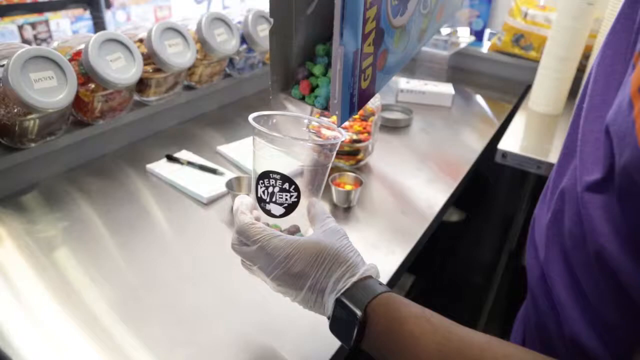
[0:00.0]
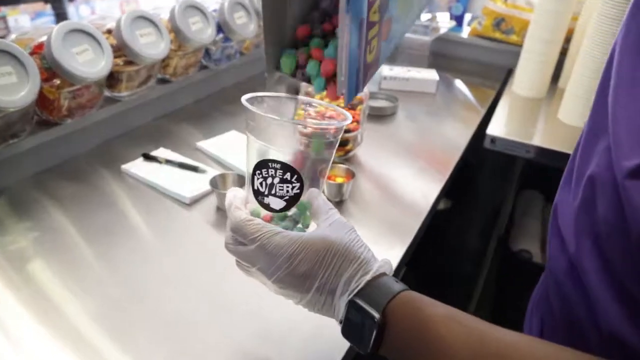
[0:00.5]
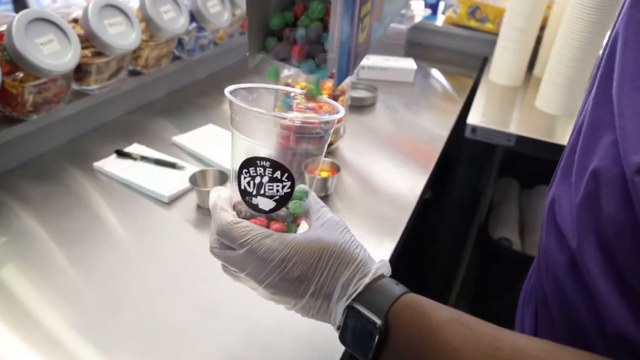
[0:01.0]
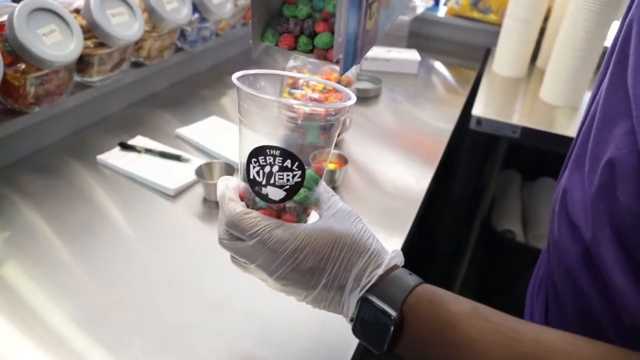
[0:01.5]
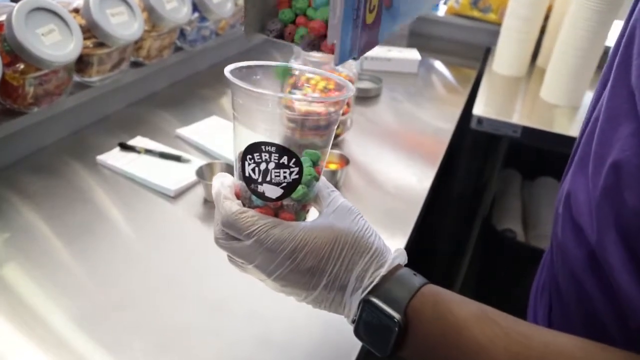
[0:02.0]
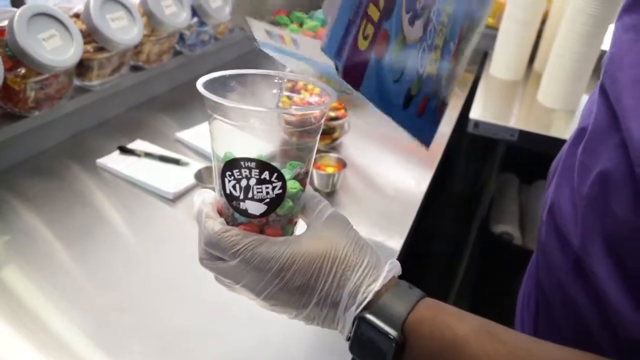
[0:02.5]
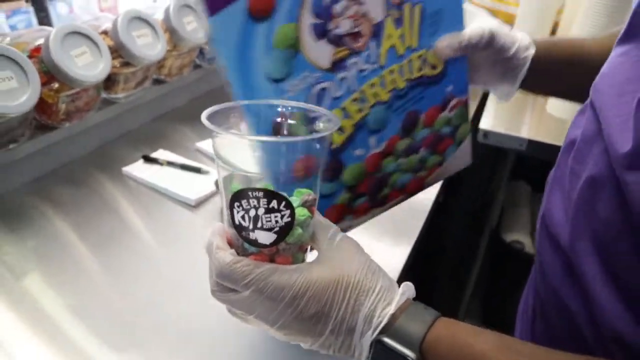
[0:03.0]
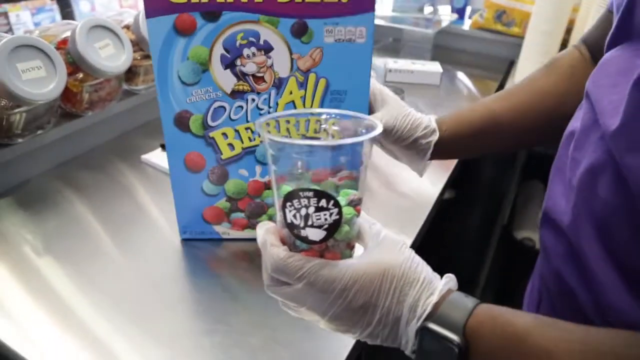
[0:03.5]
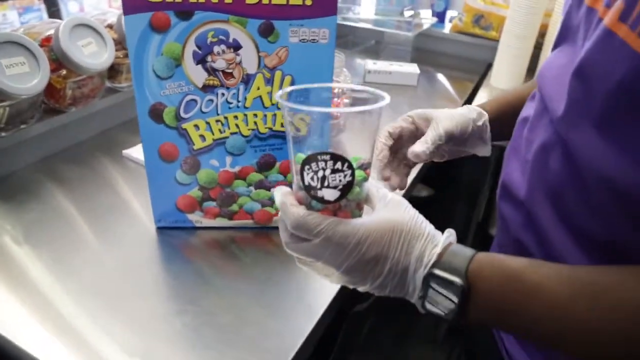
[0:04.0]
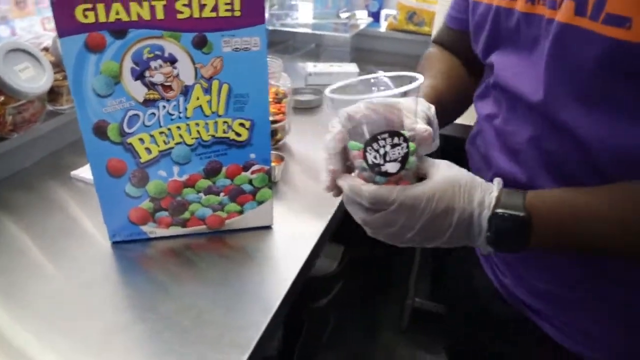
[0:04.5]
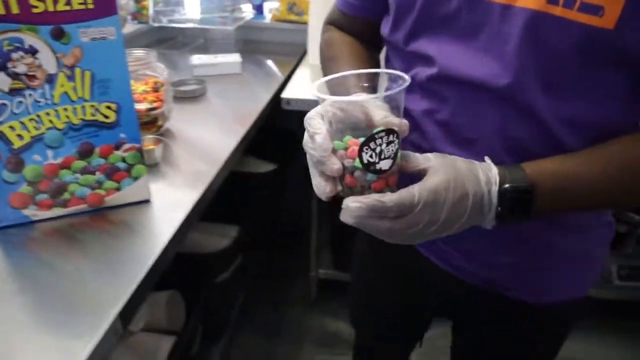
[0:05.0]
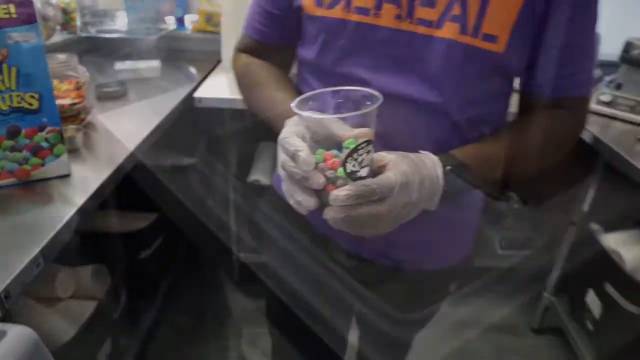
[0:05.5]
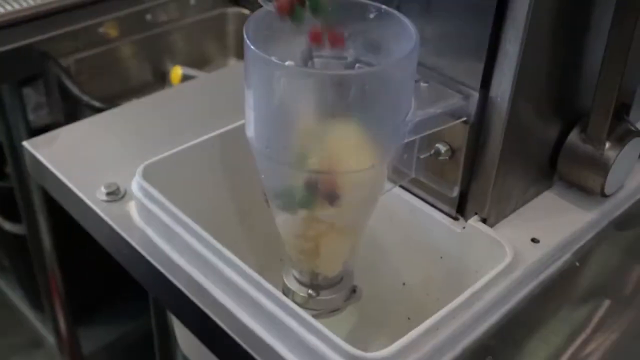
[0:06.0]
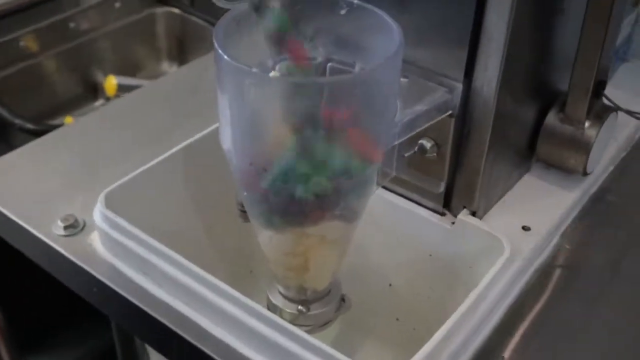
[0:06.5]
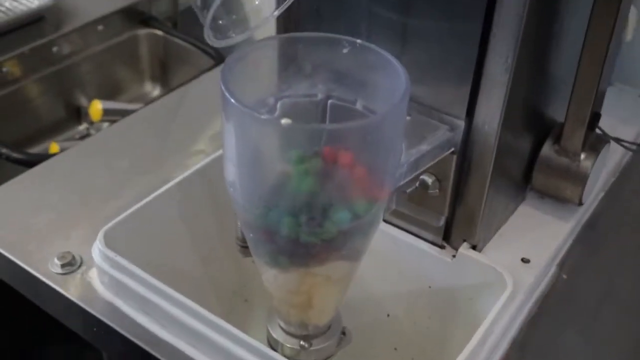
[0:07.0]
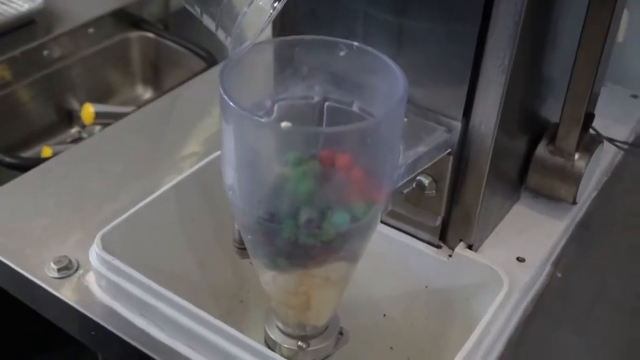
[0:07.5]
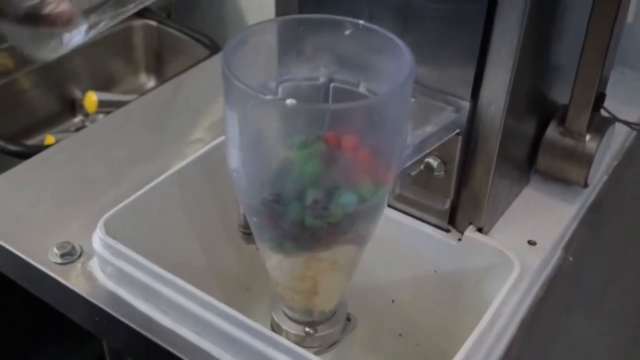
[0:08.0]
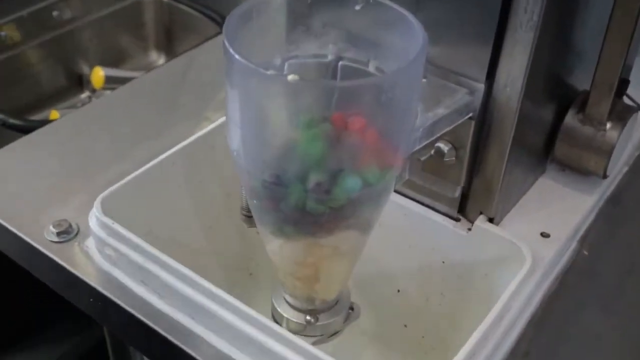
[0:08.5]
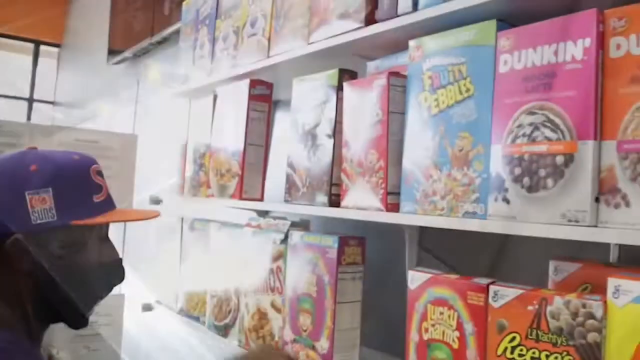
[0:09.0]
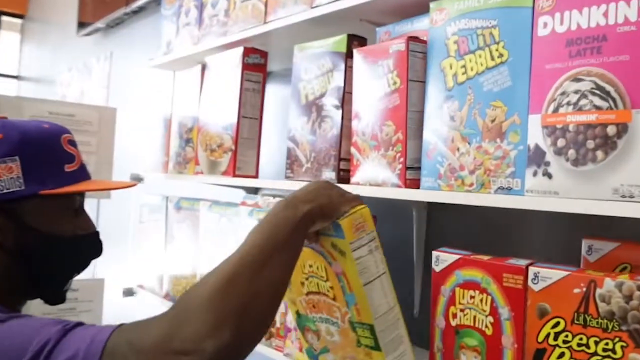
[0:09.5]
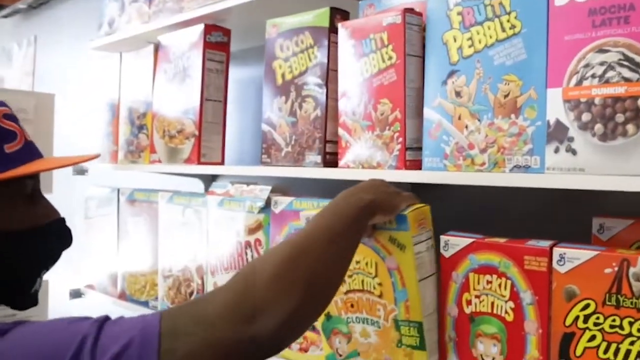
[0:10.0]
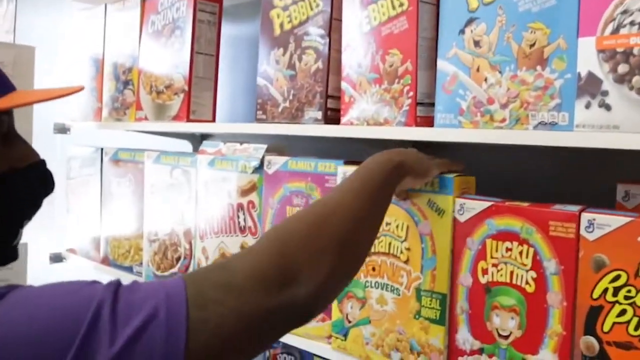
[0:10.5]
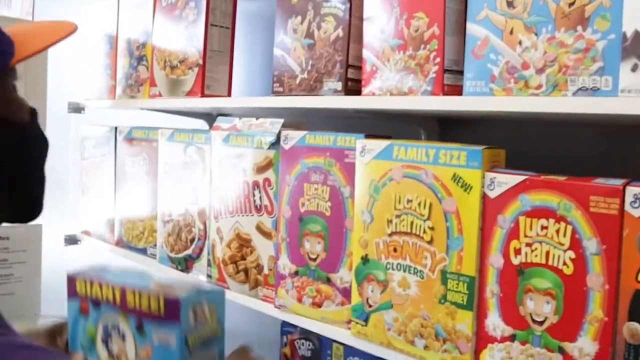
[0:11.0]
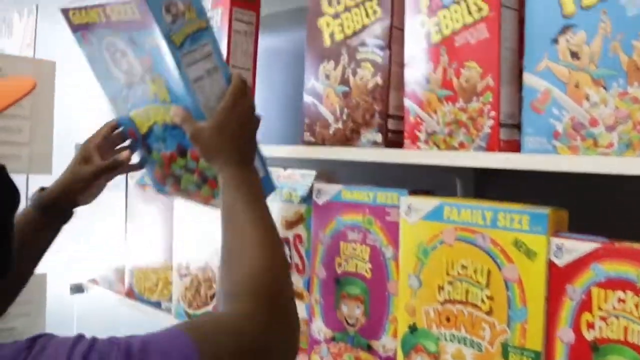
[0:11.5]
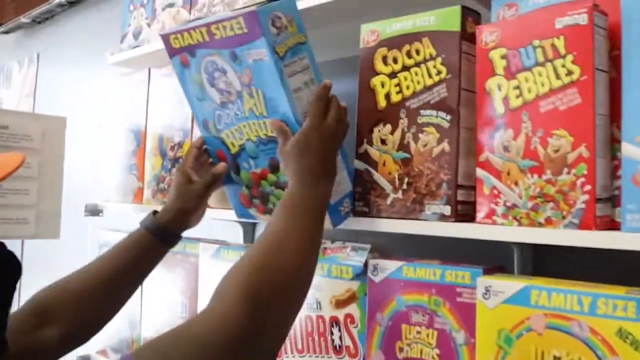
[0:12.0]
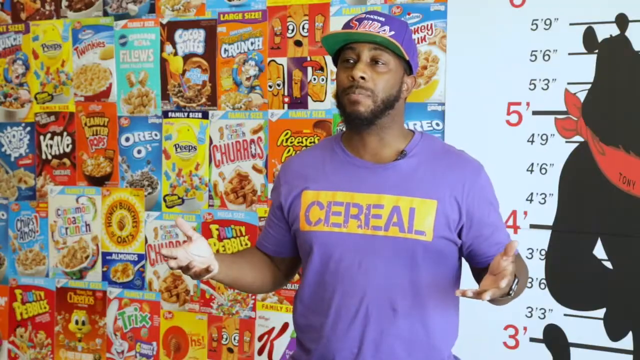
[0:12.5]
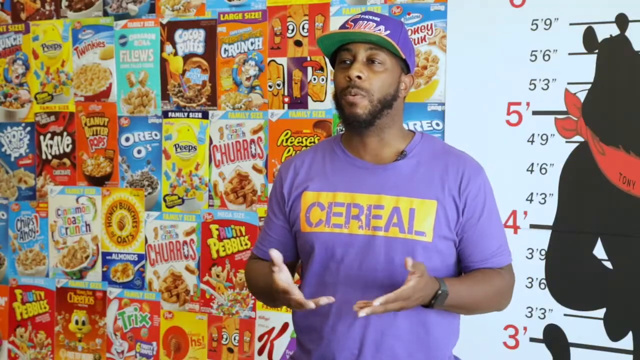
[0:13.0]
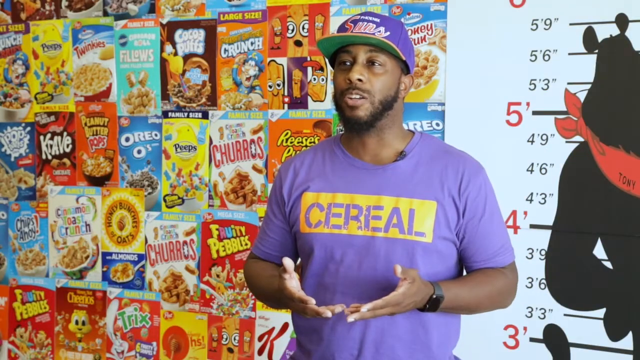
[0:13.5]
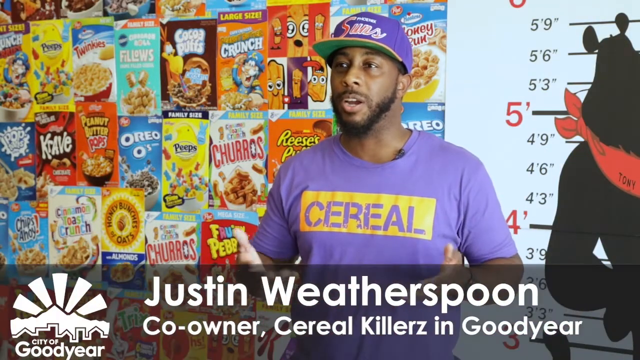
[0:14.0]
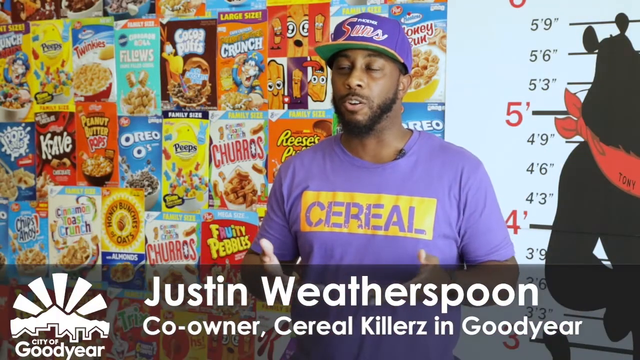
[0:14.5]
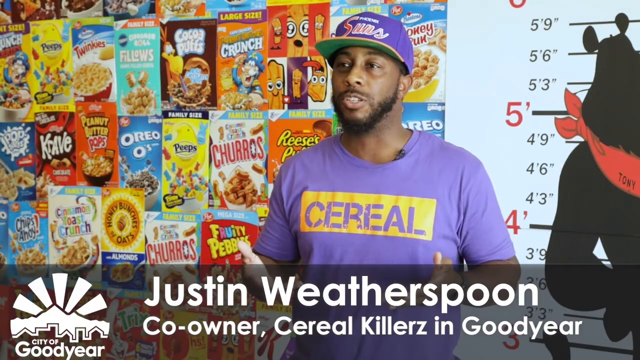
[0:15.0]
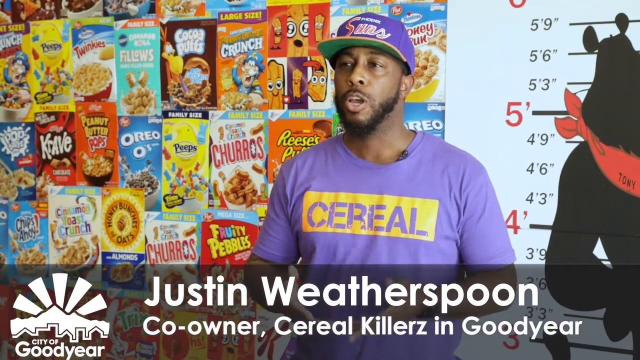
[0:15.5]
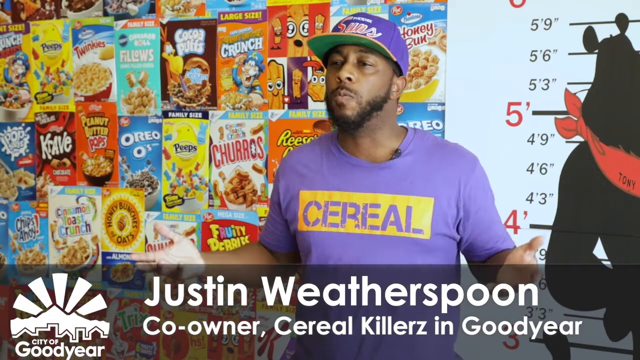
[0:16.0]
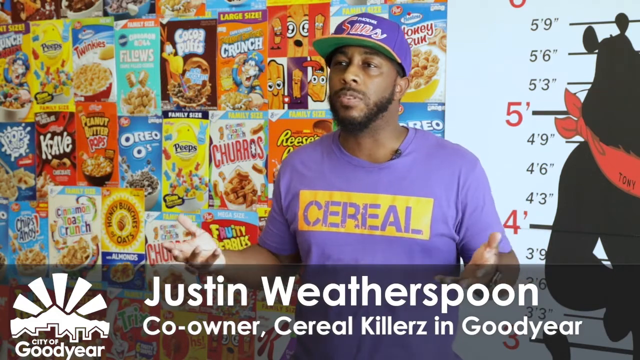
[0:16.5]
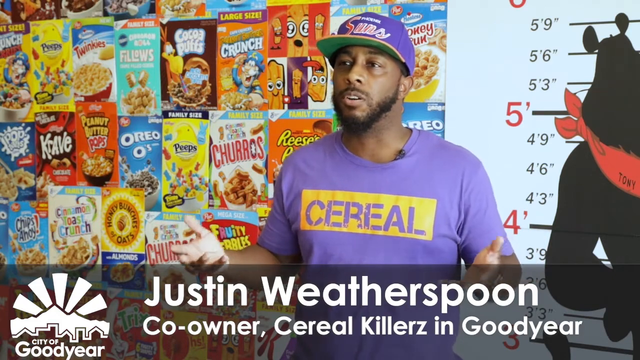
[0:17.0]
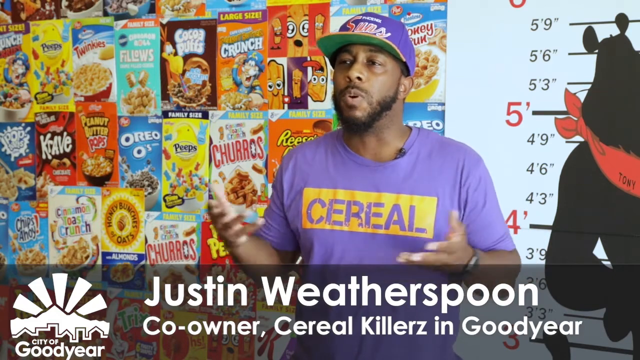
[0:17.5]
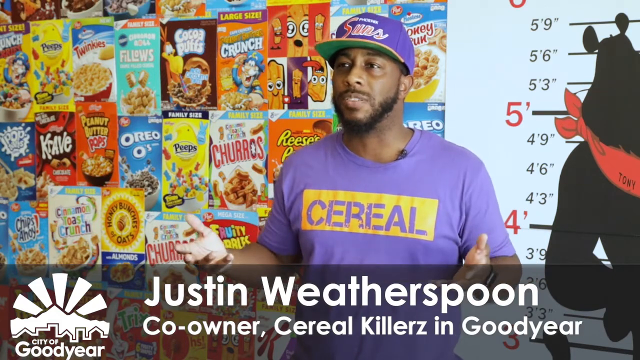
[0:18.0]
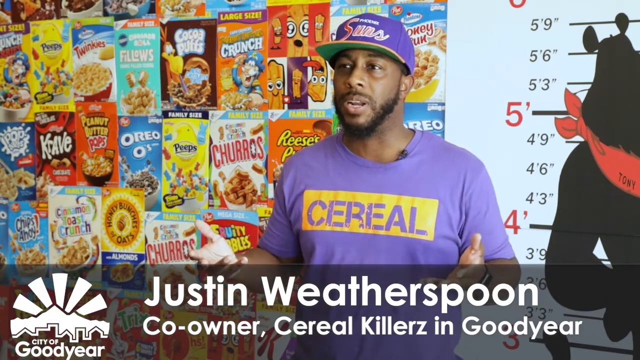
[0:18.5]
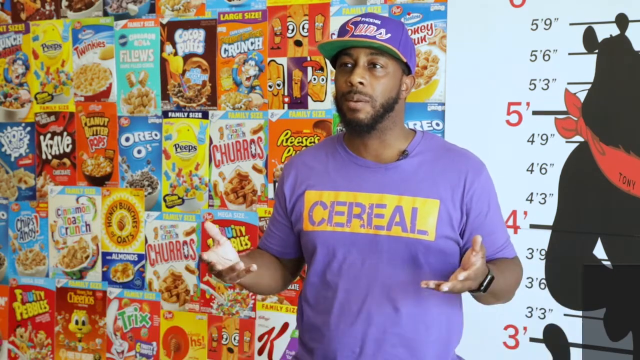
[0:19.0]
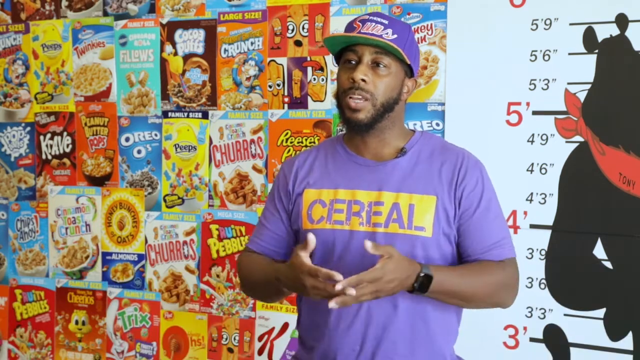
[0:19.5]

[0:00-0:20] A gloved hand wearing a black watch pours what looks to be cereal into a cup; the person also wears a purple top. The cup has a logo on it that says "Serial Killers." He fills the cup about halfway, then moves over to a different station, where cereal is being poured into what looks like a funnel of some sort. Another shot shows him picking out one of the cereal boxes. He wears a black mask and a purple and orange cap and looks enthusiastic. Out of the more than 10 cereals displayed on the shelf, he picks up Lucky Charms, which is in a yellow box. He sets it down, picks up another cereal and sets it on the shelf. He is then shown speaking directly to the camera, wearing a purple short-sleeve shirt with the "cereal" logo on it. He is identified as Justin Weatherspoon, co-owner of Serial Killers in Goodyear.